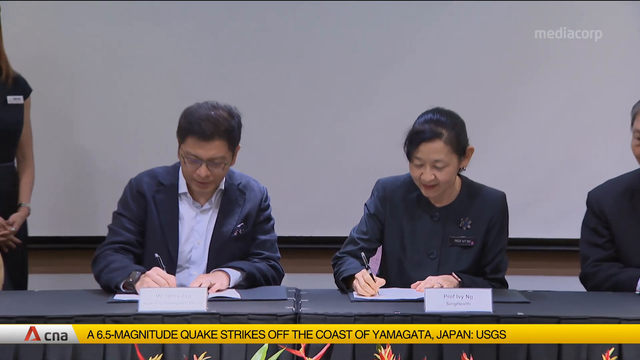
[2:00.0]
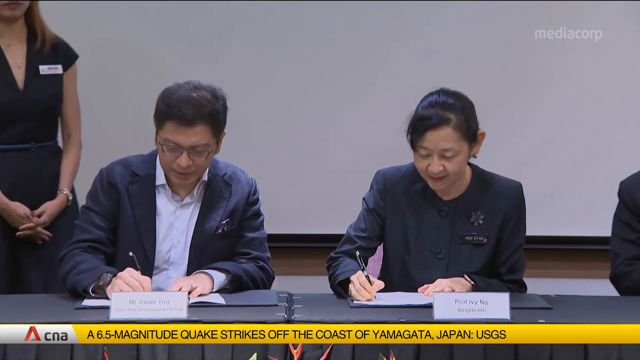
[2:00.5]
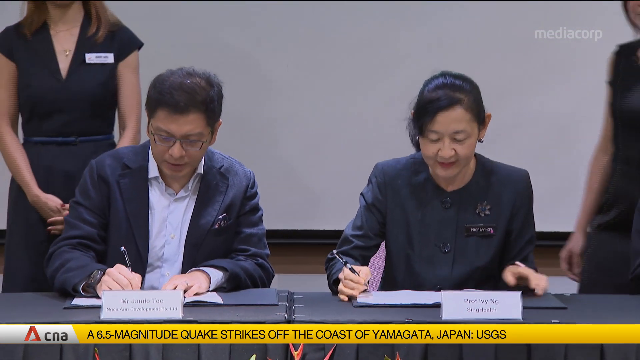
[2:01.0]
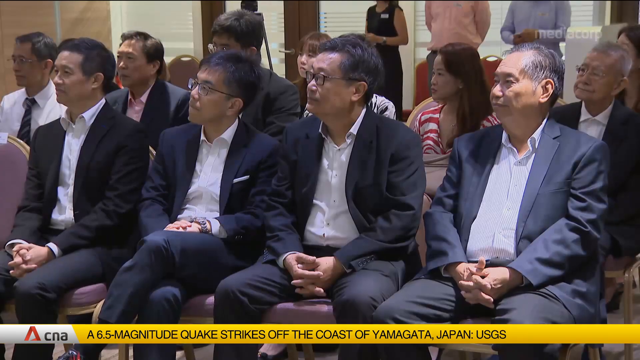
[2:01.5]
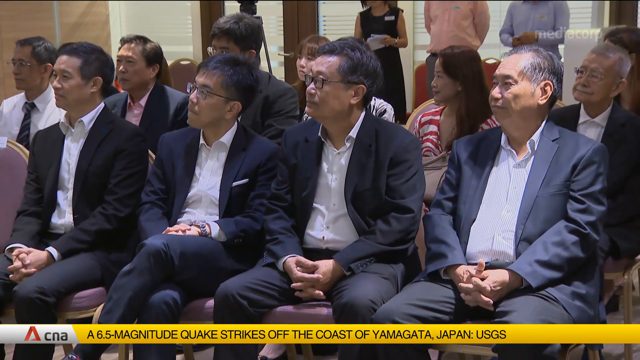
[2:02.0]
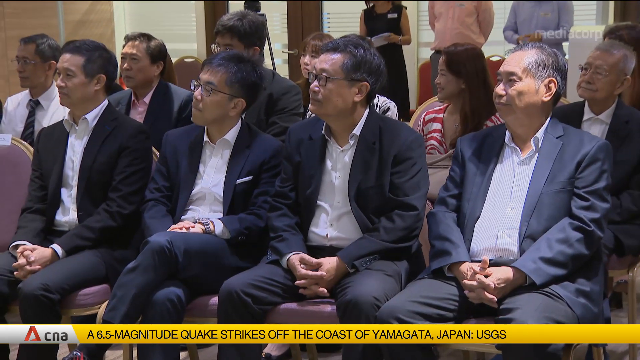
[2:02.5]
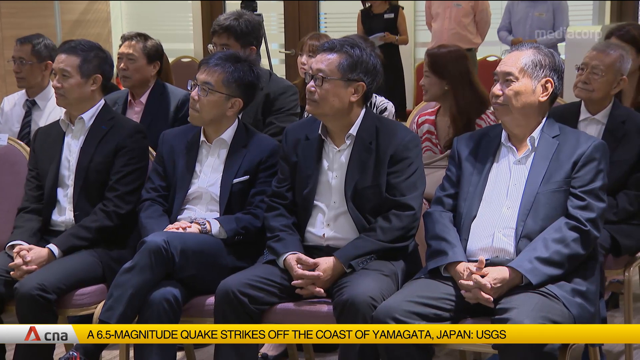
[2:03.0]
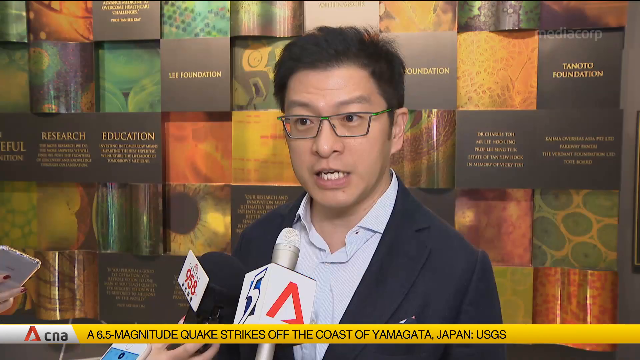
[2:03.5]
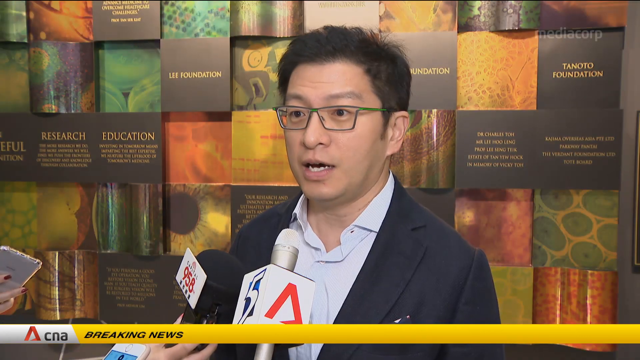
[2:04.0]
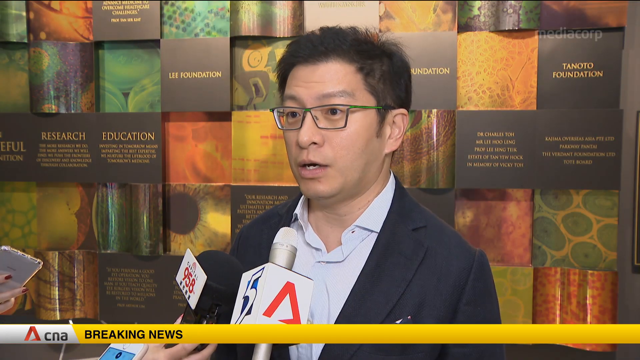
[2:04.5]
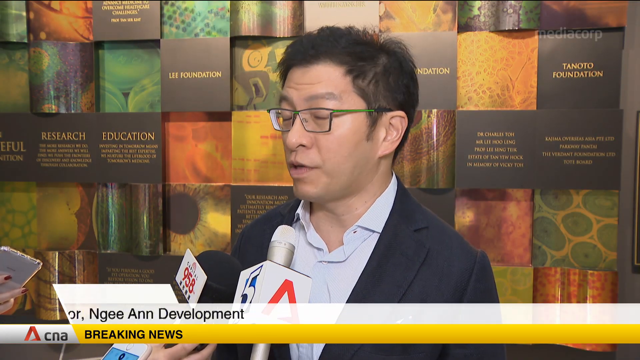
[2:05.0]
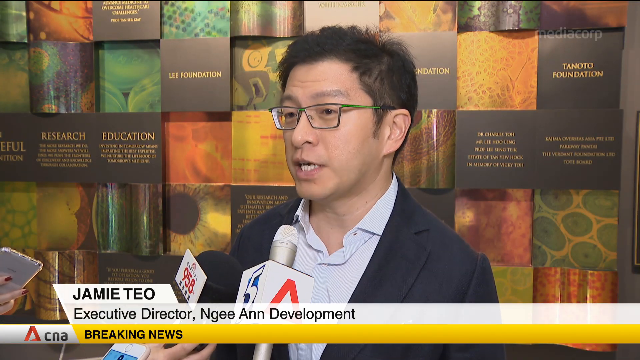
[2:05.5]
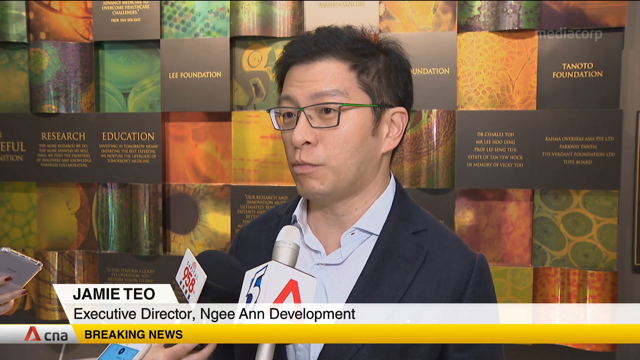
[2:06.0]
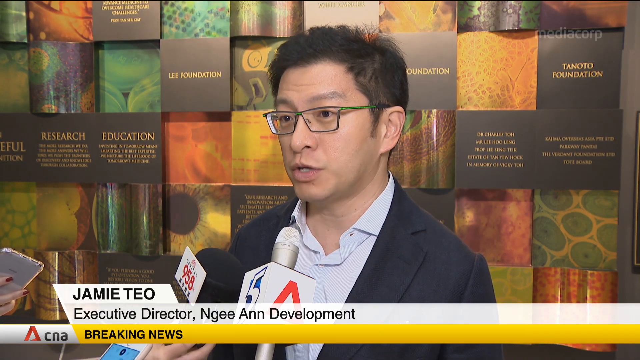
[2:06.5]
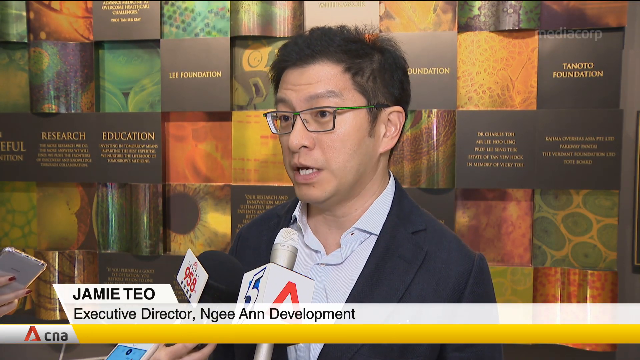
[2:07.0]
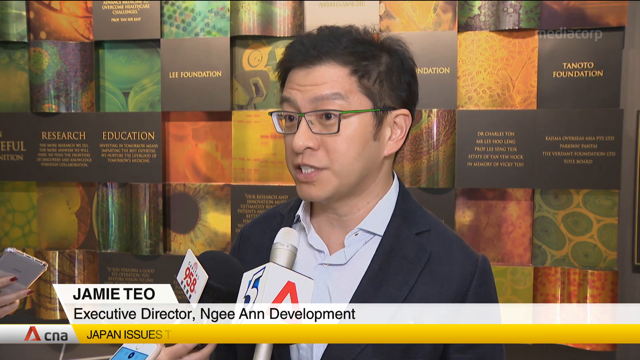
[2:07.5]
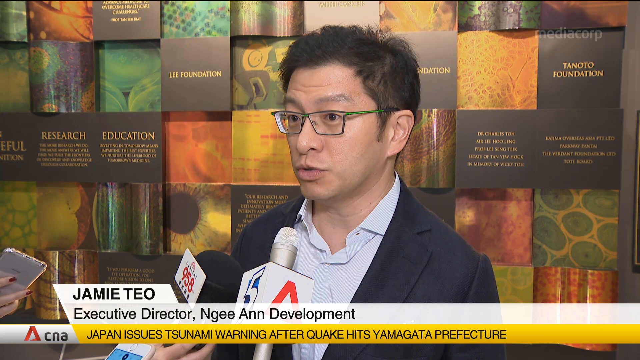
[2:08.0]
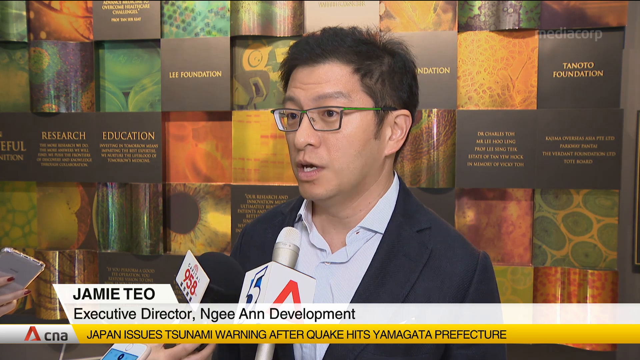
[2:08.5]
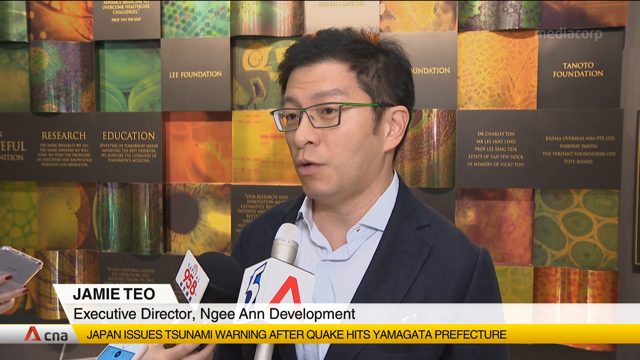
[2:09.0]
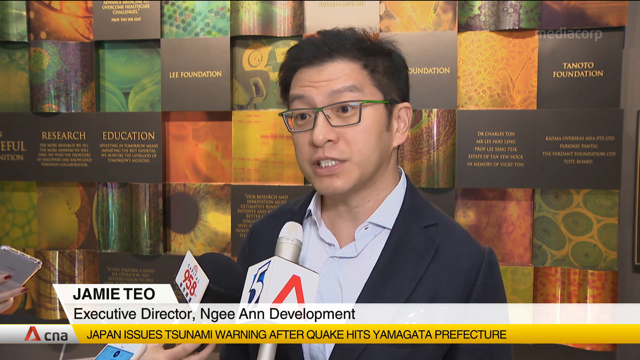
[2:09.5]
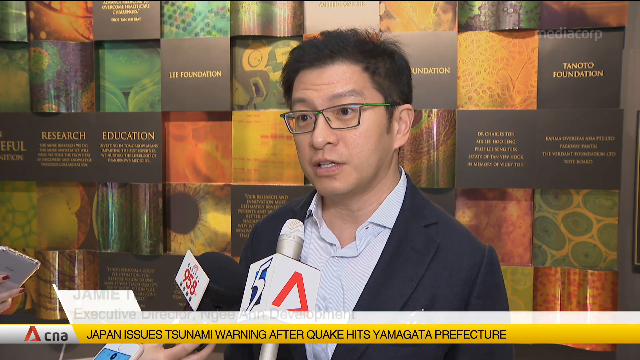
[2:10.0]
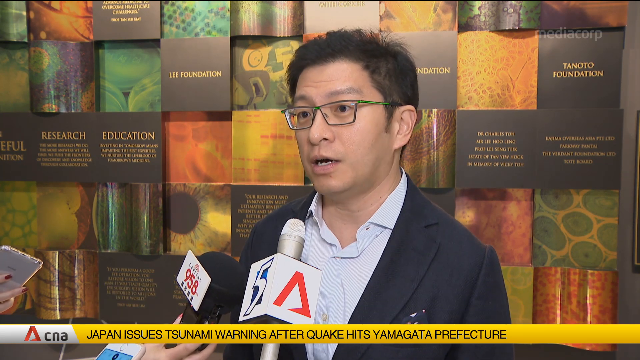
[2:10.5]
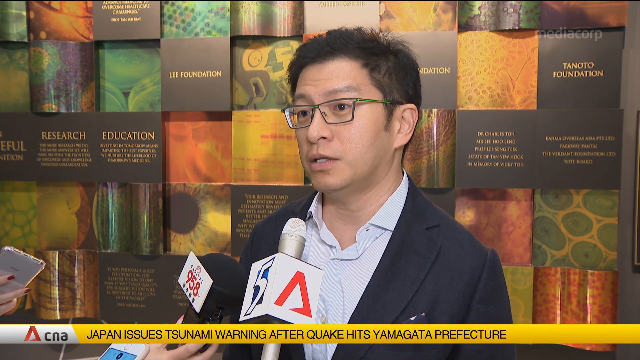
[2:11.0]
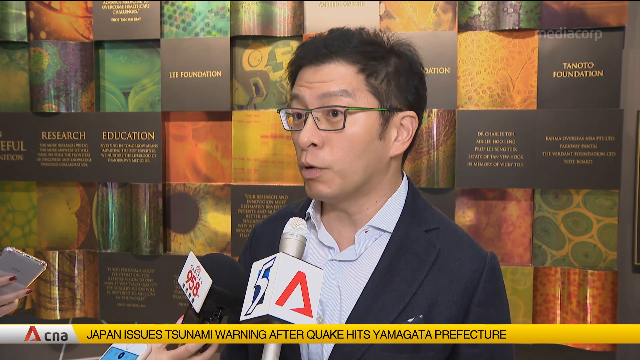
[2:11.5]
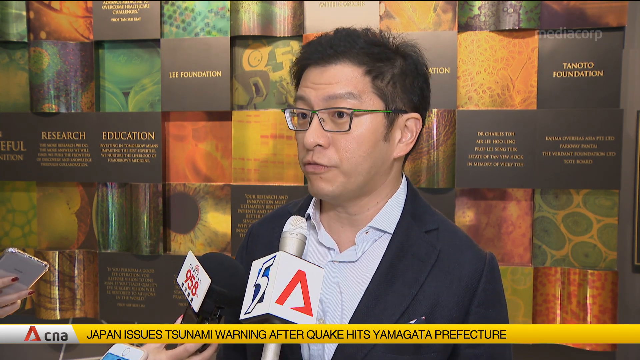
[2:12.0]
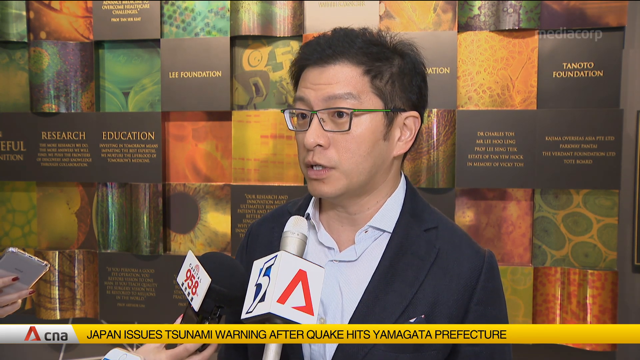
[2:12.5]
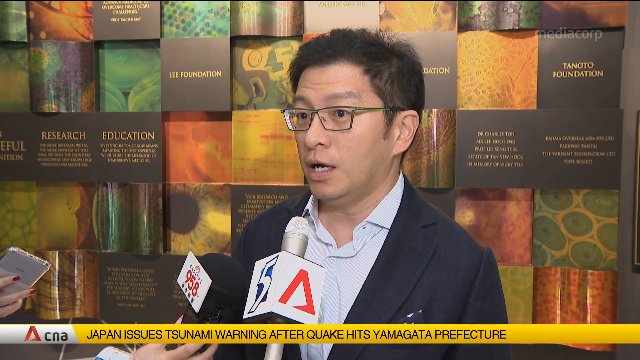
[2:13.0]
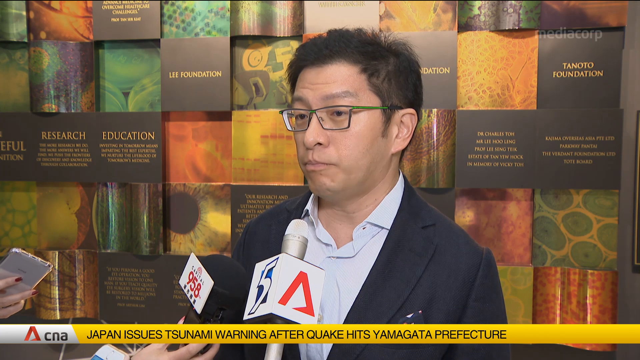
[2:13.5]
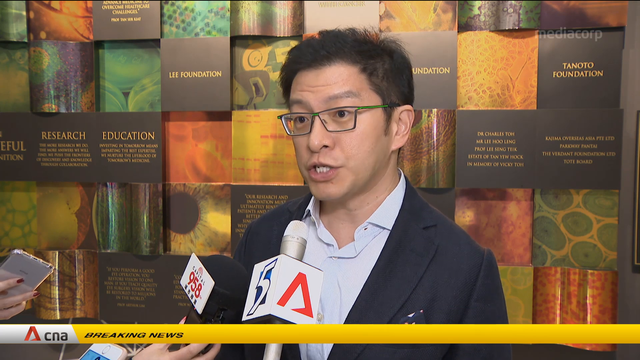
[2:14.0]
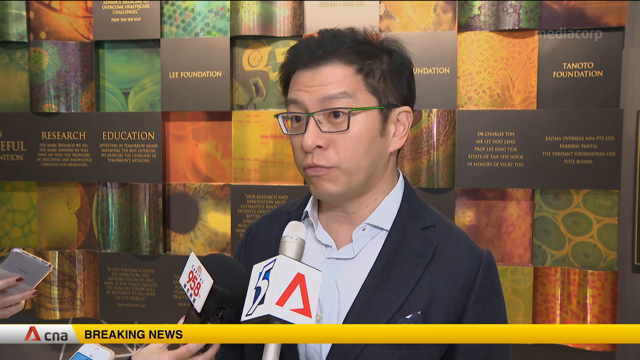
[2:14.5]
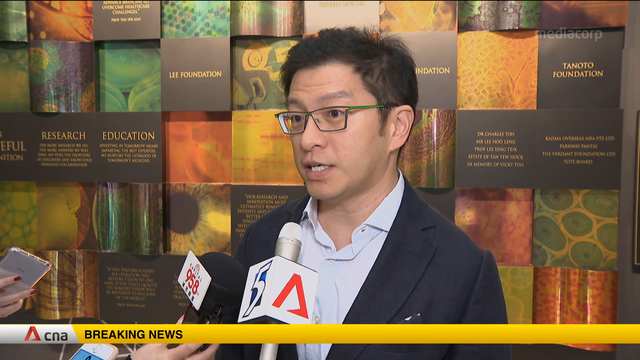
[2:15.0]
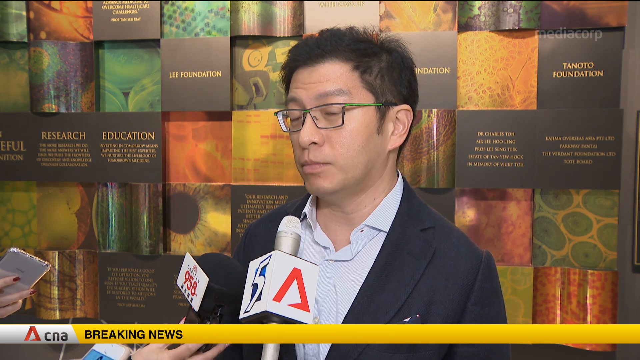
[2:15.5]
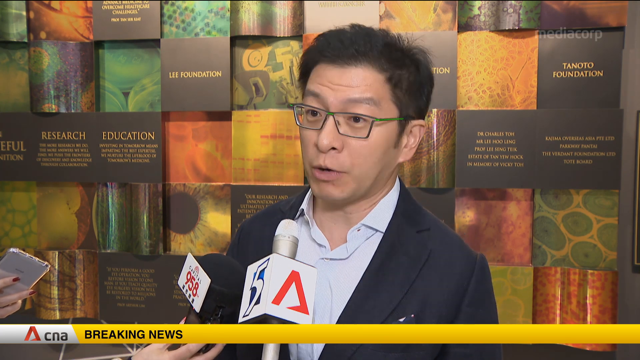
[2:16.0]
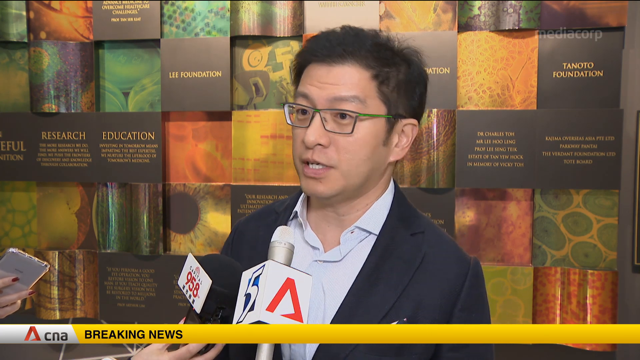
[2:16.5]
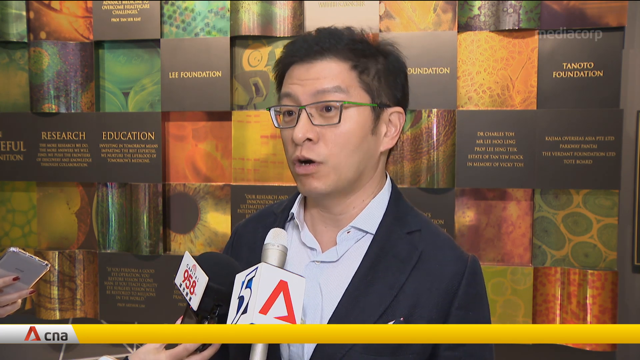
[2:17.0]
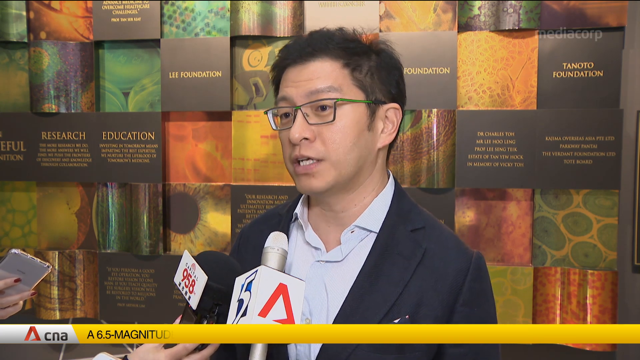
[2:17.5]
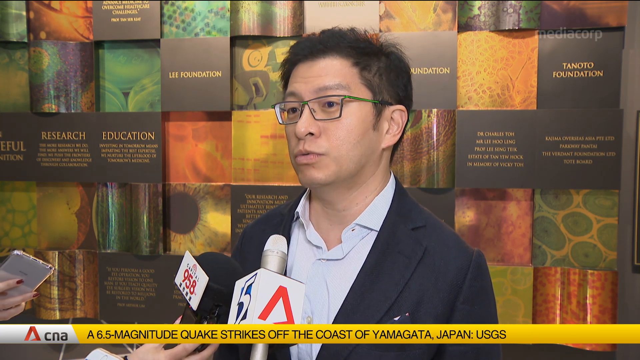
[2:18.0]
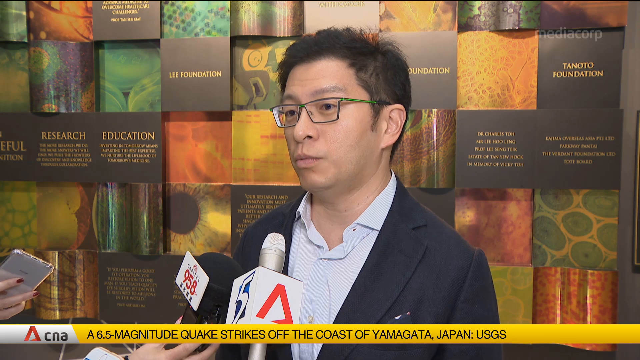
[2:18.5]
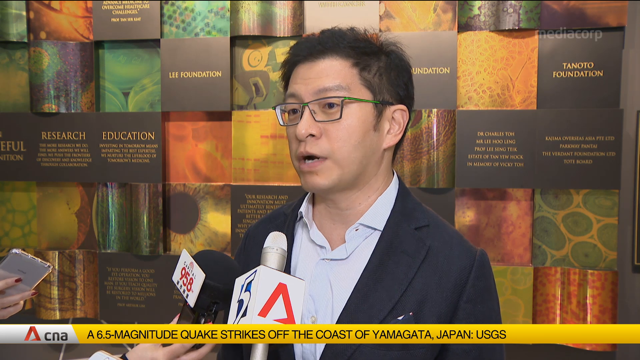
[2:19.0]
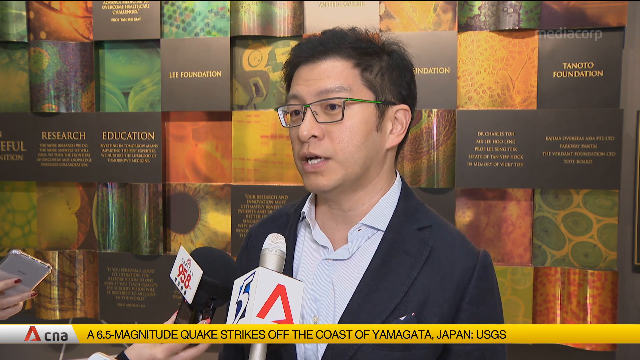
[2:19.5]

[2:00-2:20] Two Asian people sit in the center, evenly left and right, in front of a black table running left to right along the bottom and off screen on both sides, apparently signing documents. Both wear black business attire; the man on the left has glasses, and the woman on the right has her hair back. The camera zooms in a little more on them, then switches to a group of people sitting and looking toward the left side of the screen. Every person is Asian. The front row has four men in business attire such as sports jackets with white shirts underneath; the second row is mixed gender; three people stand in the back, their heads not visible. This then switches to an interview of an Asian man, with his name, "Jamie Teo," at the bottom.